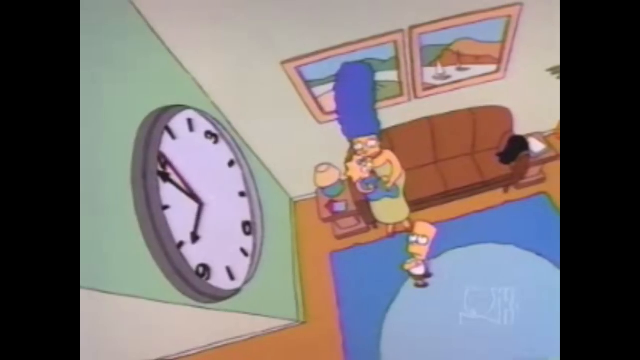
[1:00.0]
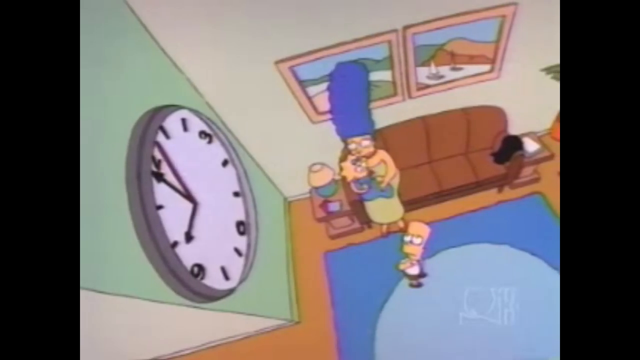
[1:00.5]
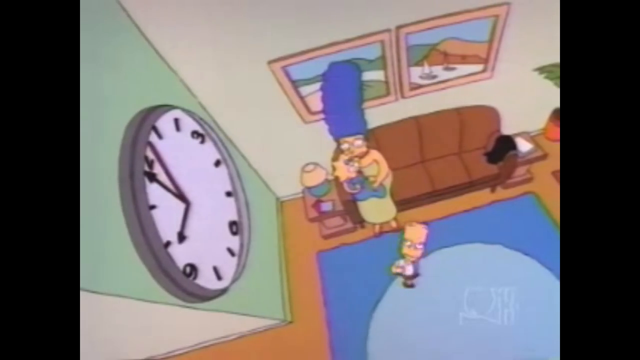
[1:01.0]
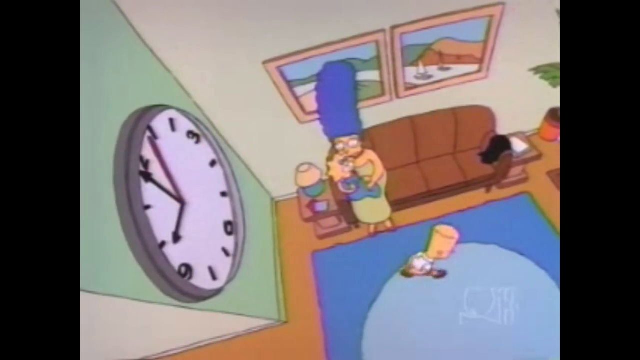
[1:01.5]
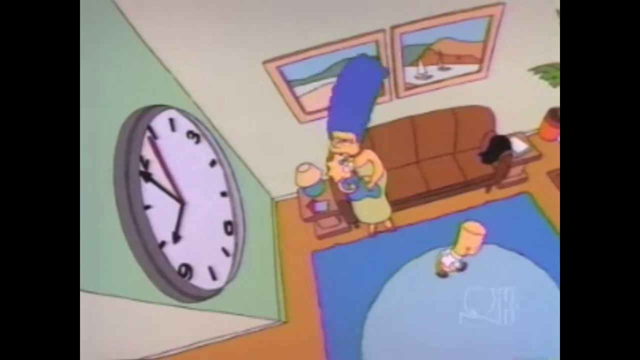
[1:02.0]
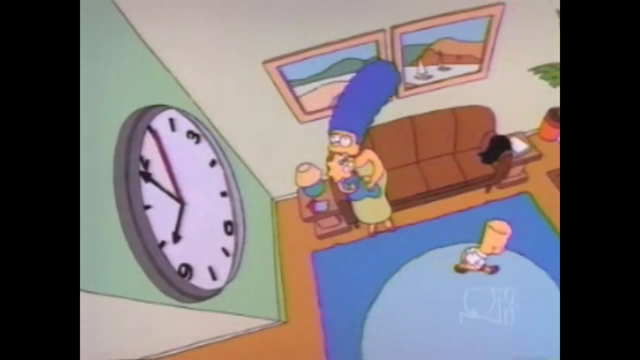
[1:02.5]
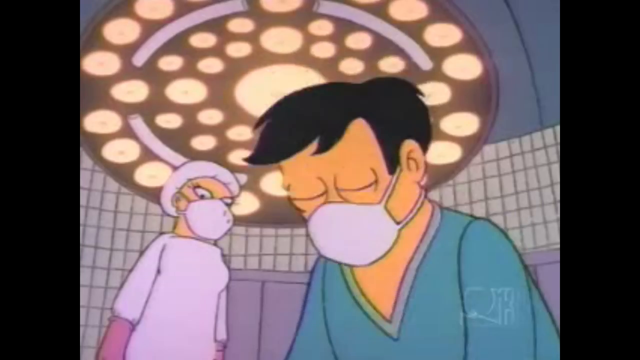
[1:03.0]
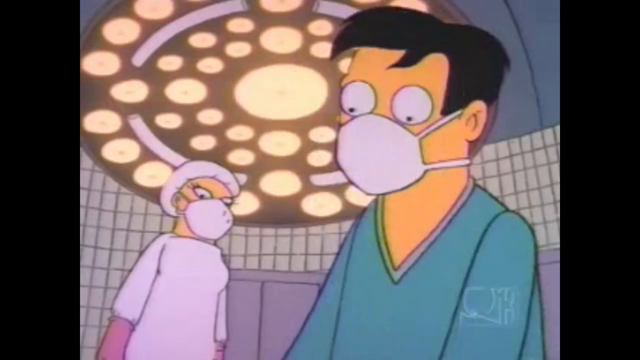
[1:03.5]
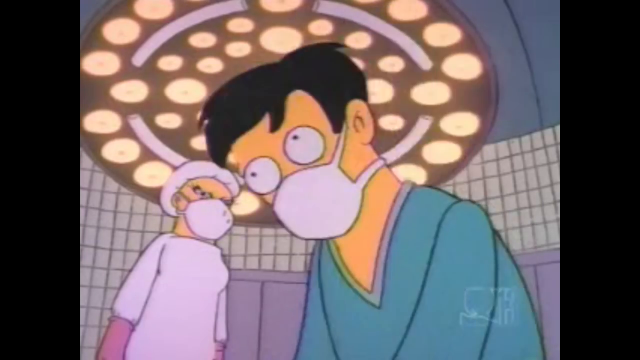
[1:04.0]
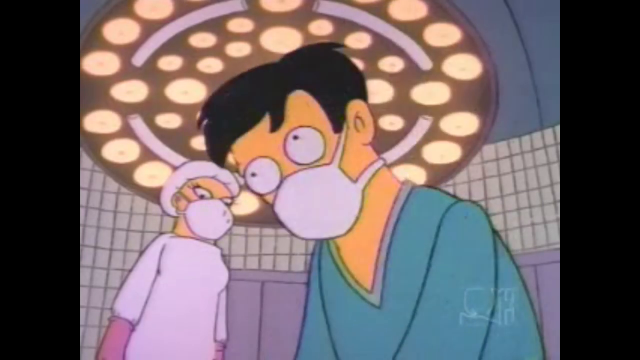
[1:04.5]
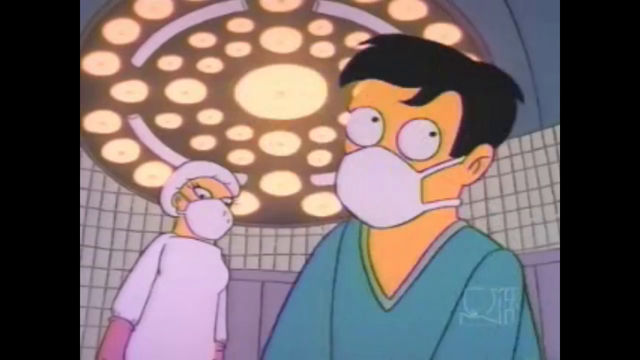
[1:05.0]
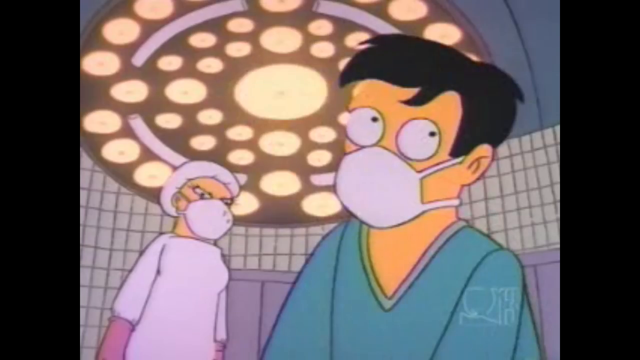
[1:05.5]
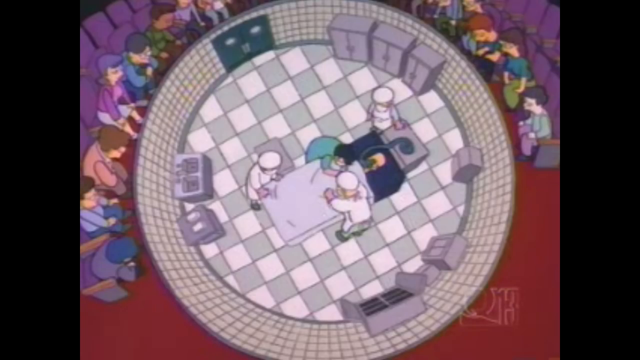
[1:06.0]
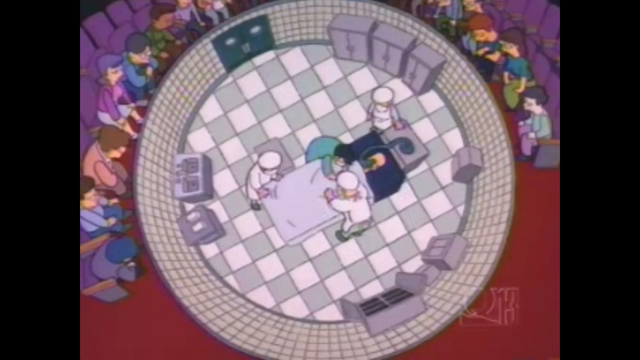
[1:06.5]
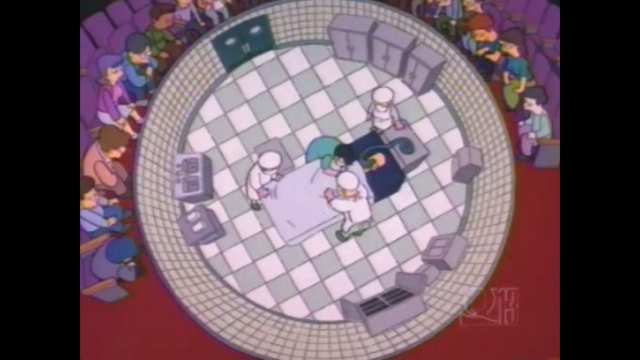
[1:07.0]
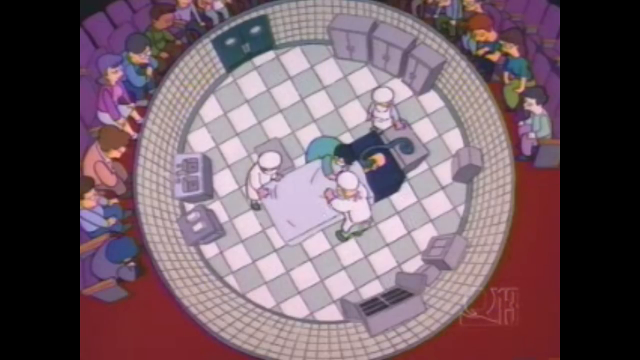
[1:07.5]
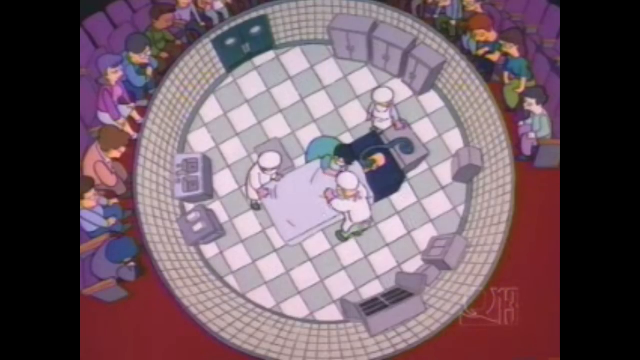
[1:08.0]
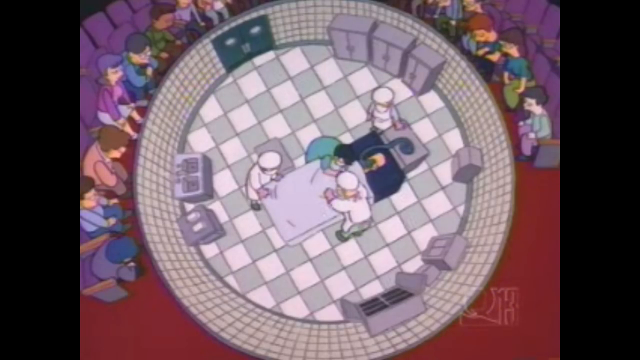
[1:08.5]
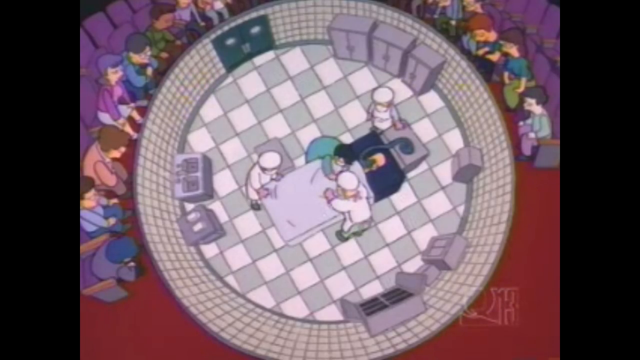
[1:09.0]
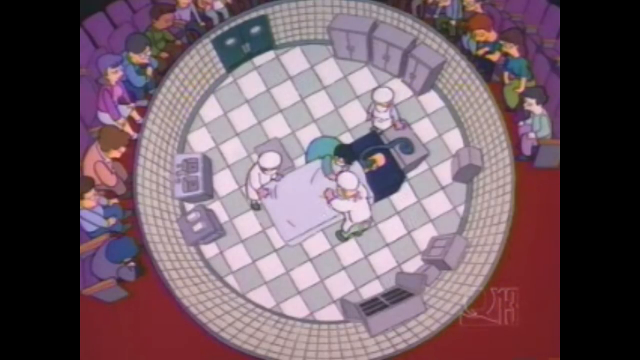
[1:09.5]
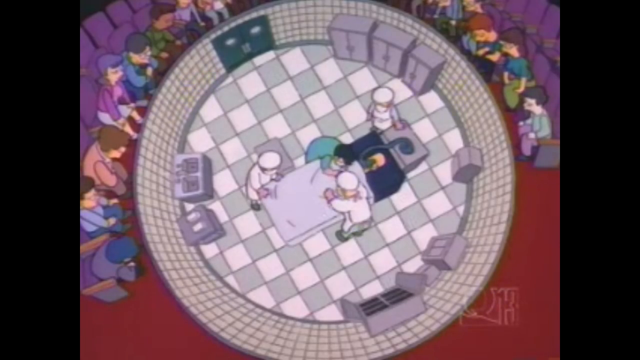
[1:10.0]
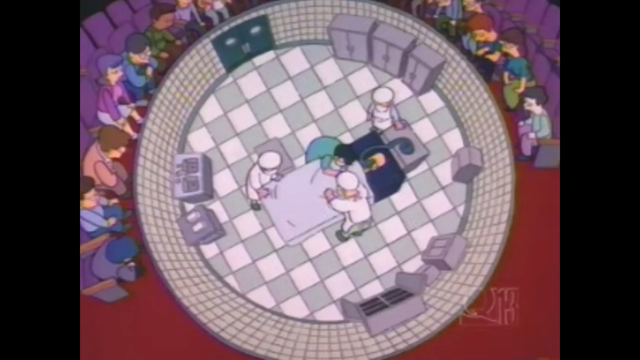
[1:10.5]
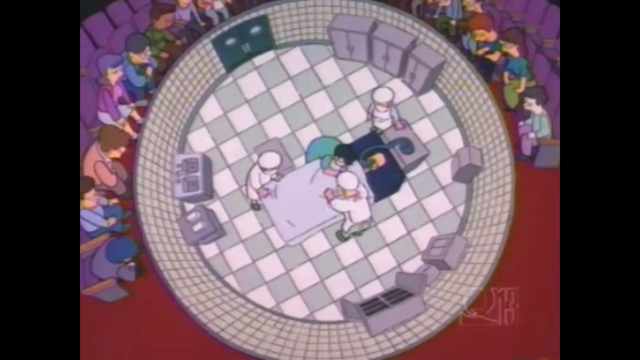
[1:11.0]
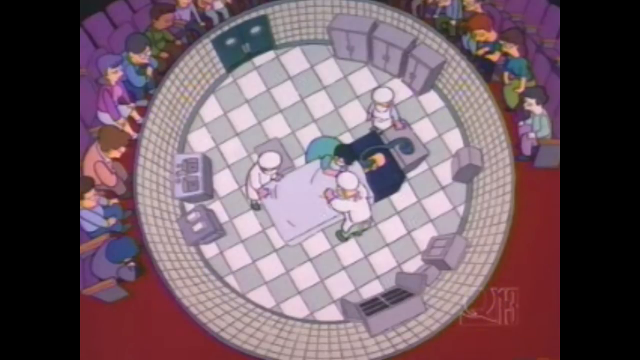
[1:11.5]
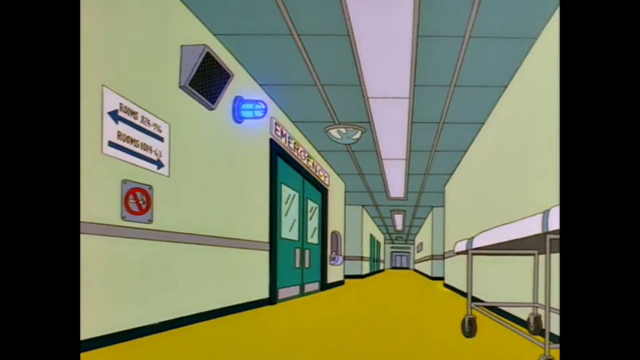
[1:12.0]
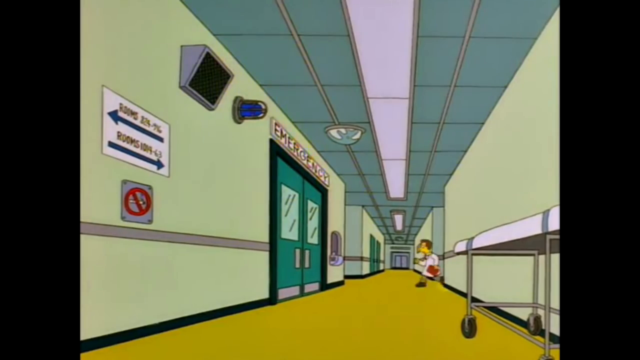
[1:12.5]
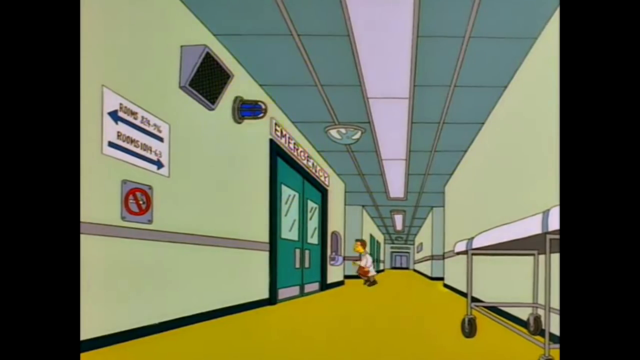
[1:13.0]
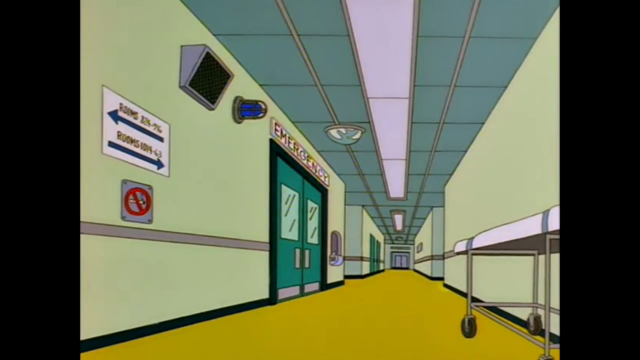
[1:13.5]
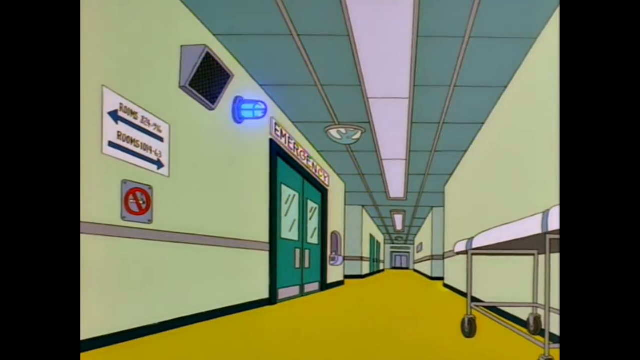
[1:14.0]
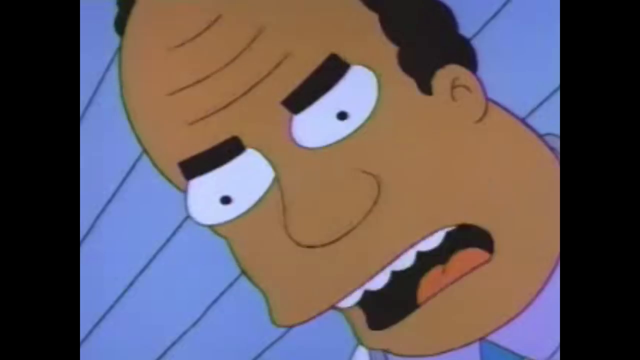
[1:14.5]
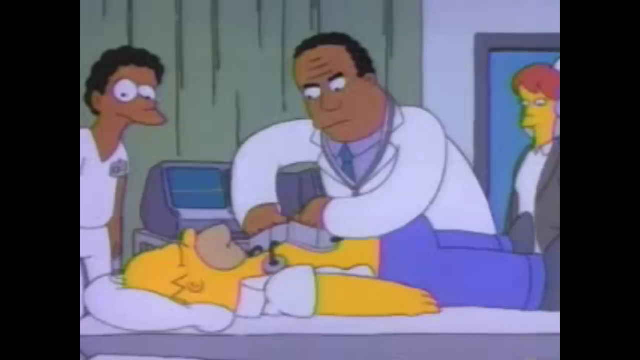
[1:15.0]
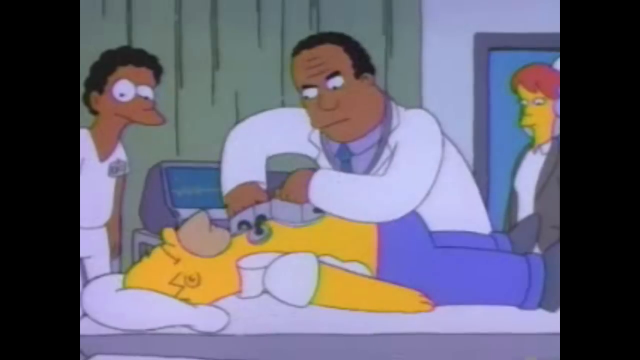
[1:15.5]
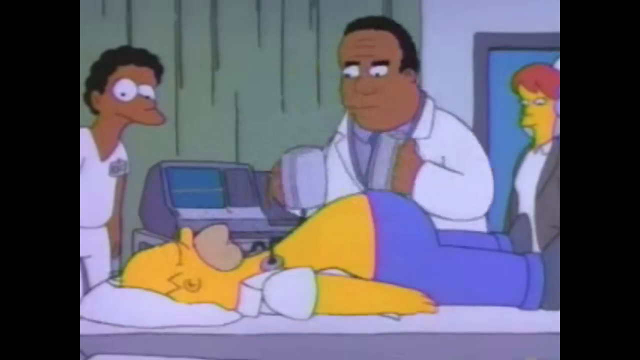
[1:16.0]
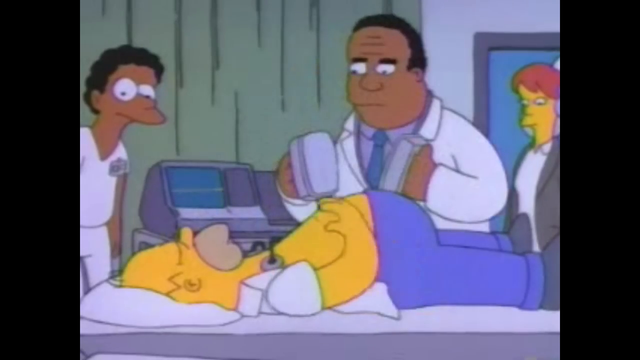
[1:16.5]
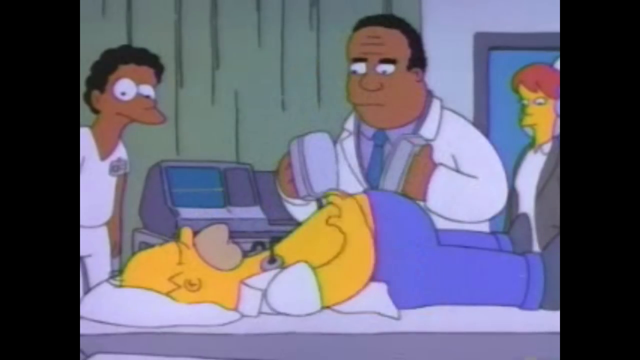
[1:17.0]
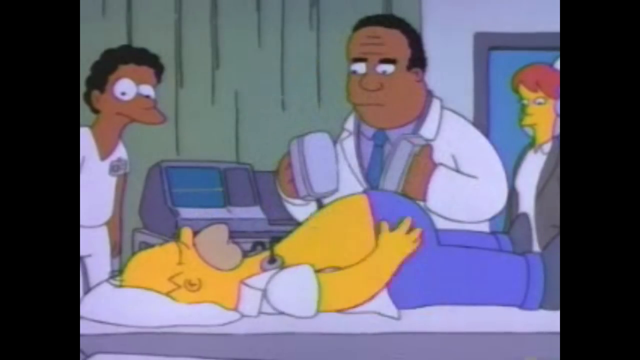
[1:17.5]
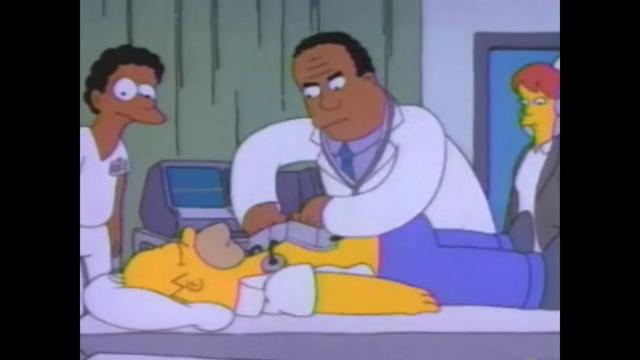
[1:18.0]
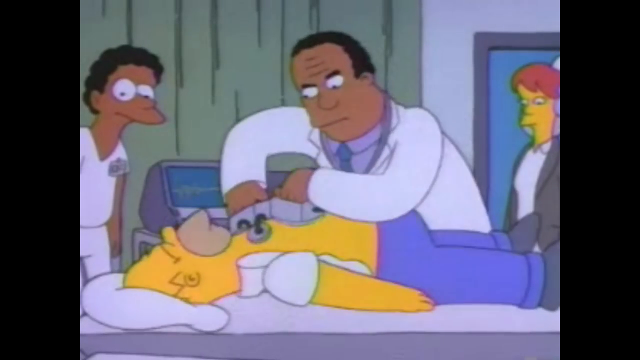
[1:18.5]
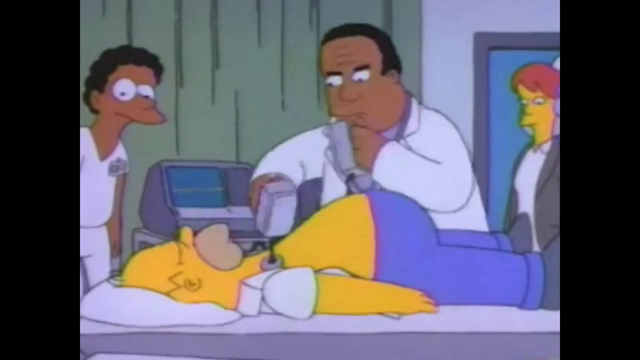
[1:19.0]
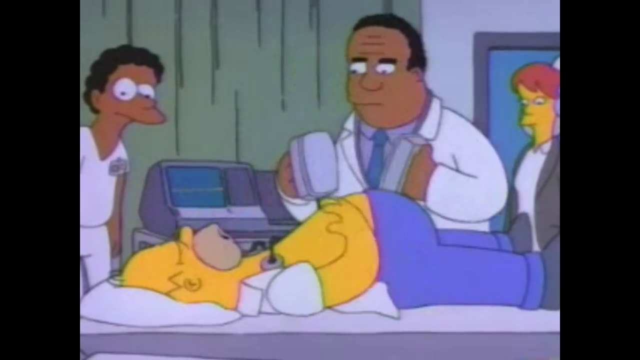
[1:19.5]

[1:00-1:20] Maggie Simpson sits on a couch in a waiting room. Behind her, two framed pieces of artwork hang on the wall; her hair blocks the one on the left so its picture cannot be seen, and the one on the right, which is very hard to see, appears to show maybe two sailboats or two vehicles in a race. On the wall to her right, a little green strip of wall goes up, and the clock appears to read 10 o'clock. Bart is down on the floor in front of Maggie, looking up at the clock, and she holds the little baby in her hands. The rug in the middle of the room is a dark blue square with a white or lighter blue circle in the middle. Bart is very nervous, pacing the waiting room anxiously and looking up at the clock. The scene then switches to the operating room, where there is an emergency: Homer Simpson will not wake up, and each time they shock him he has to be shocked more.